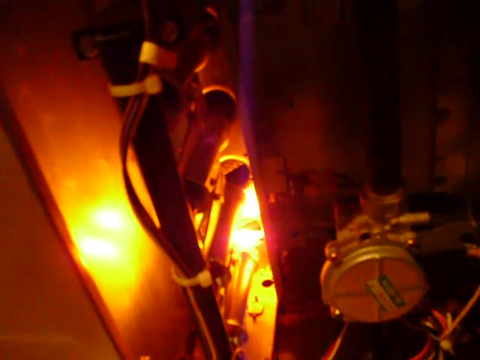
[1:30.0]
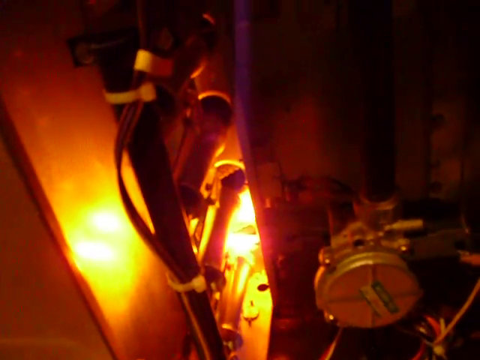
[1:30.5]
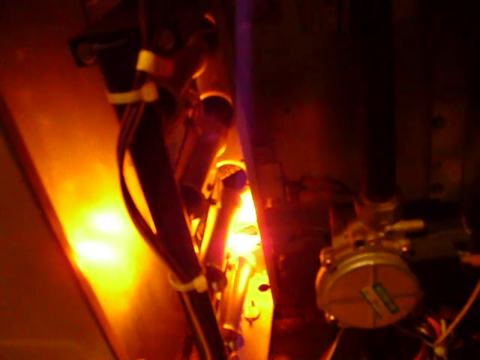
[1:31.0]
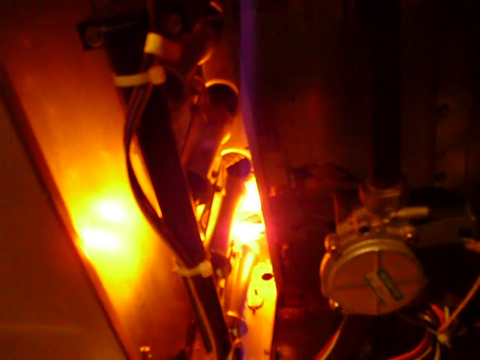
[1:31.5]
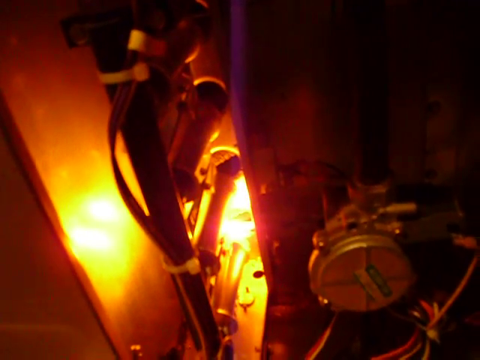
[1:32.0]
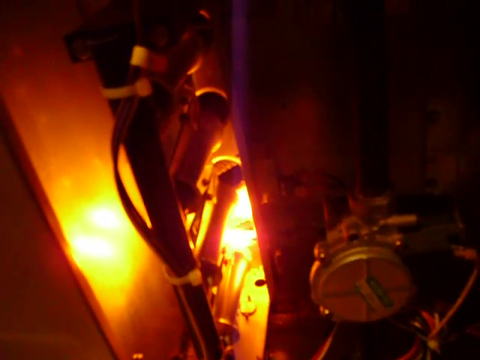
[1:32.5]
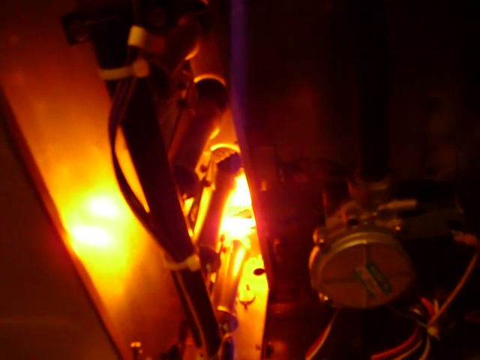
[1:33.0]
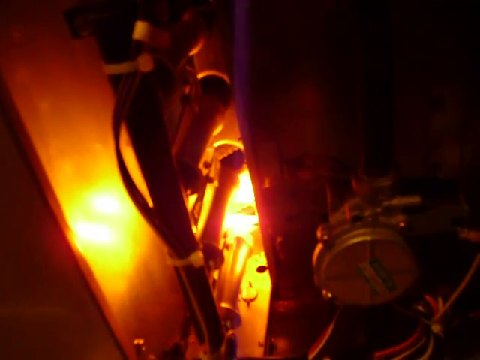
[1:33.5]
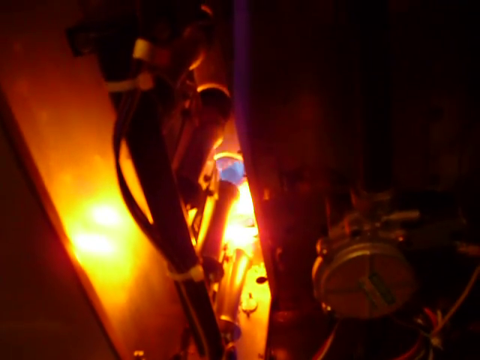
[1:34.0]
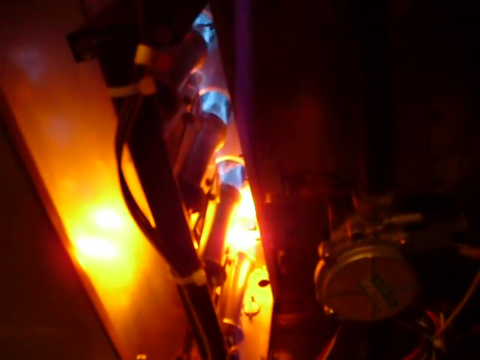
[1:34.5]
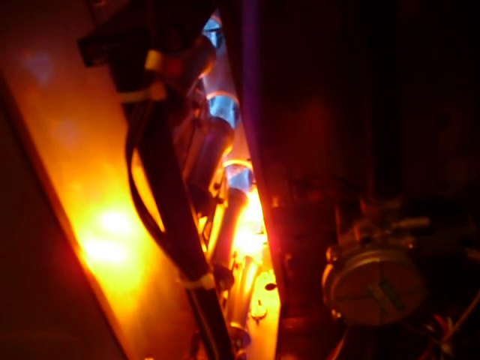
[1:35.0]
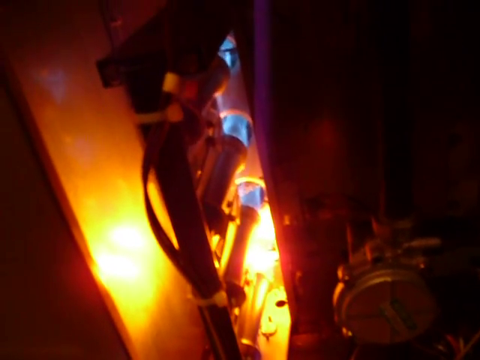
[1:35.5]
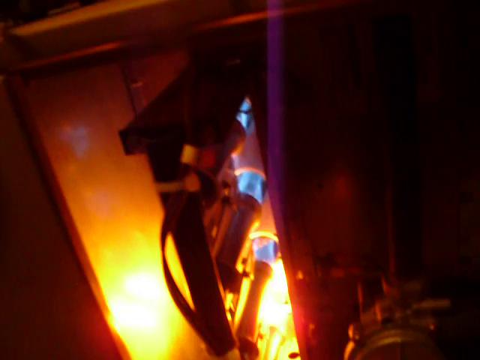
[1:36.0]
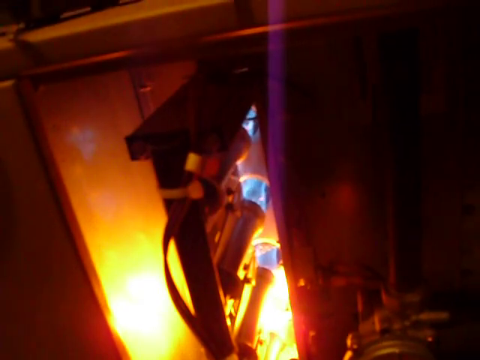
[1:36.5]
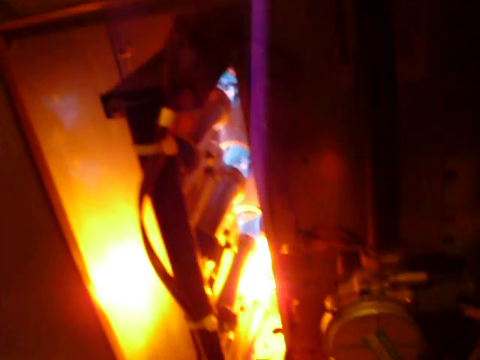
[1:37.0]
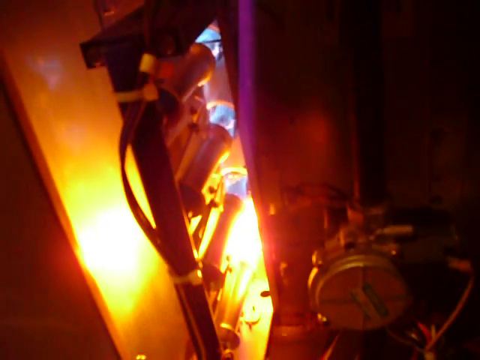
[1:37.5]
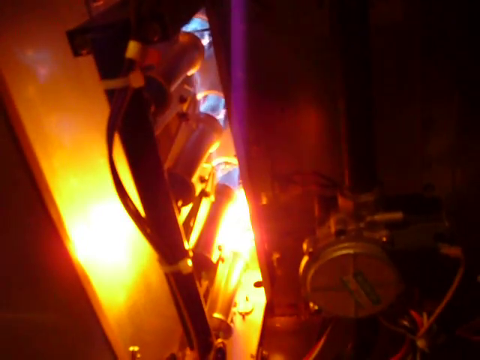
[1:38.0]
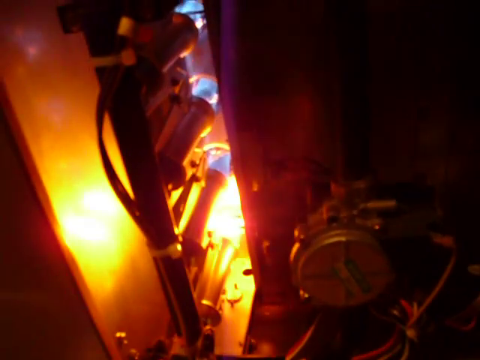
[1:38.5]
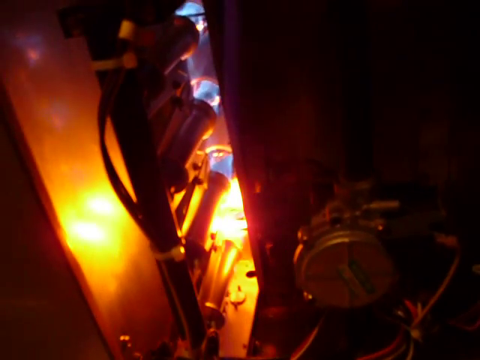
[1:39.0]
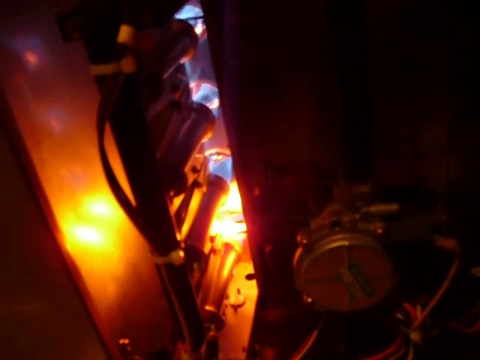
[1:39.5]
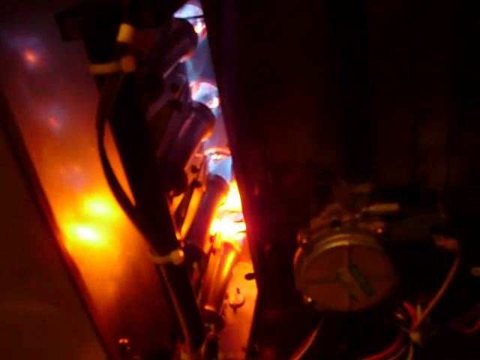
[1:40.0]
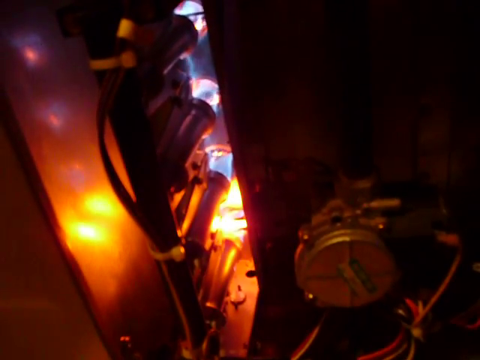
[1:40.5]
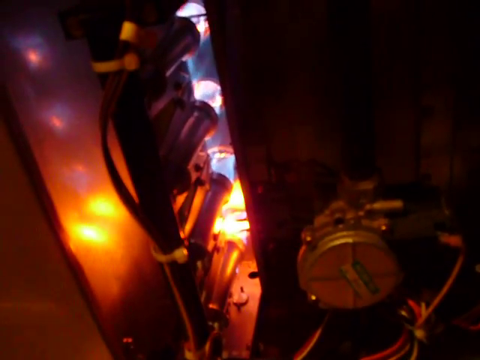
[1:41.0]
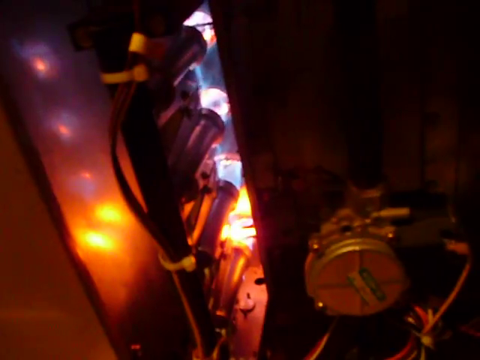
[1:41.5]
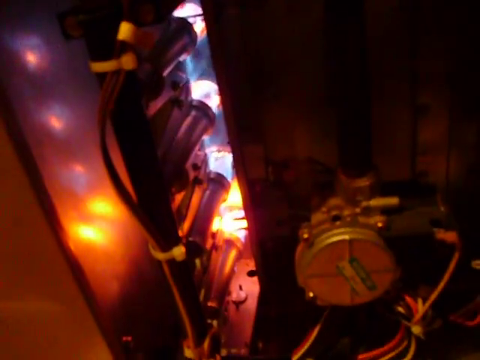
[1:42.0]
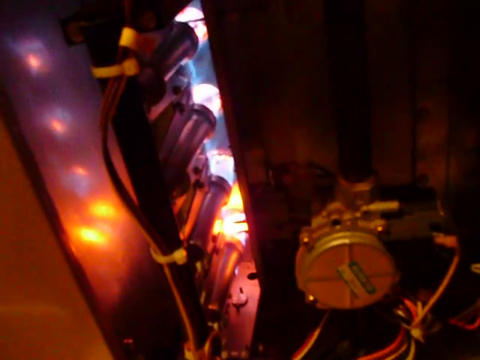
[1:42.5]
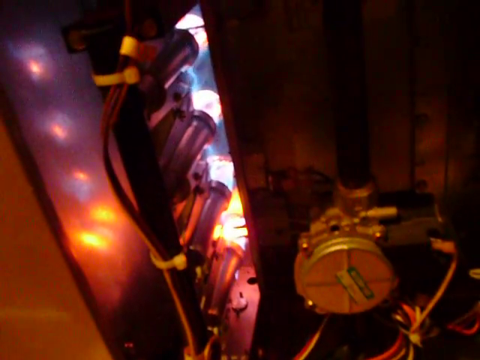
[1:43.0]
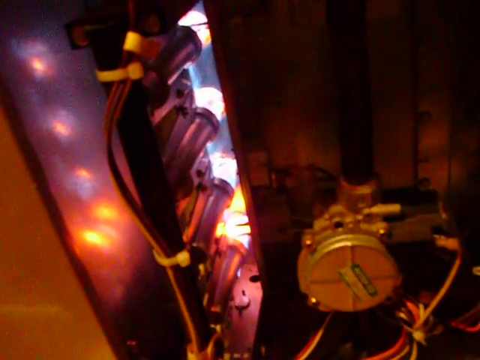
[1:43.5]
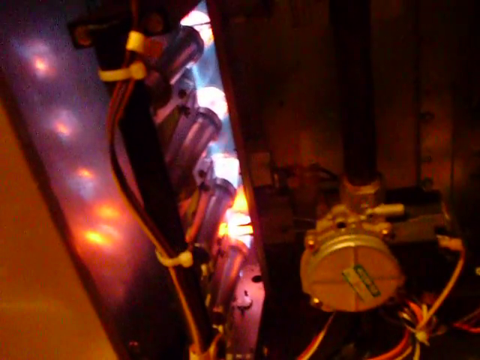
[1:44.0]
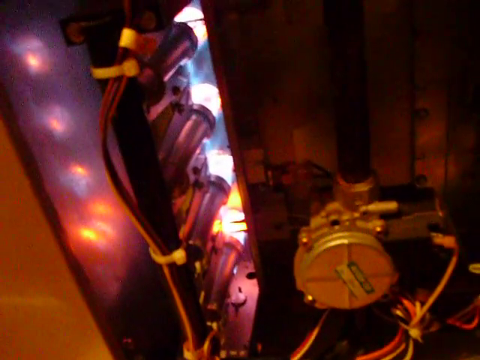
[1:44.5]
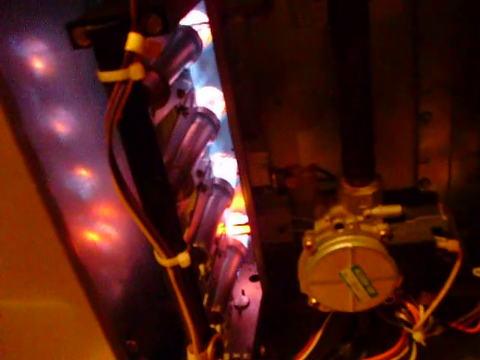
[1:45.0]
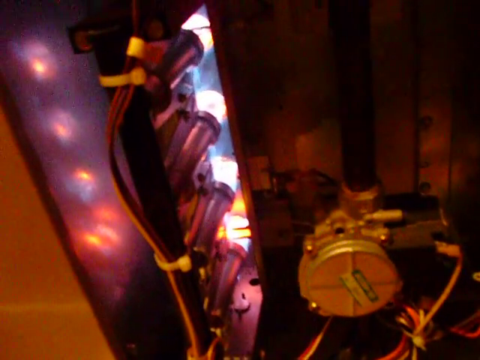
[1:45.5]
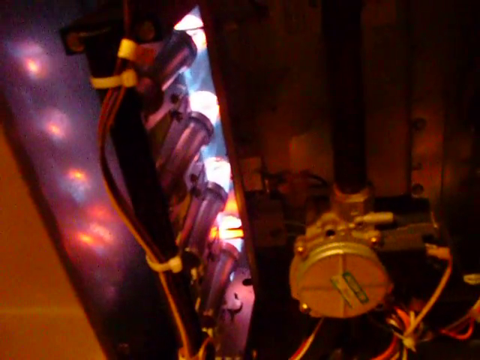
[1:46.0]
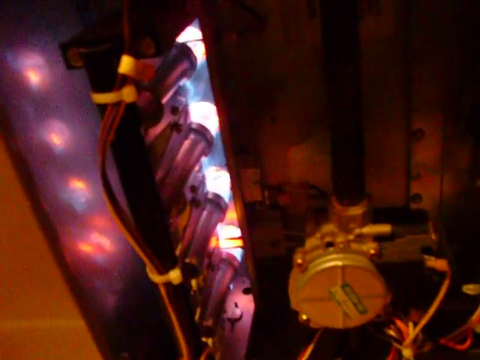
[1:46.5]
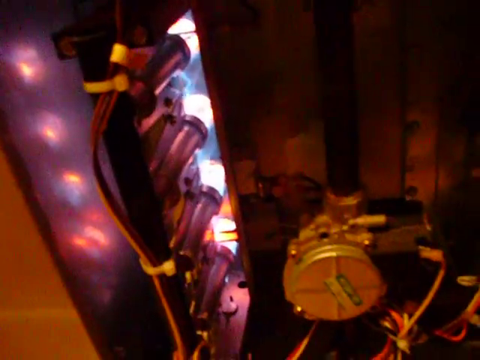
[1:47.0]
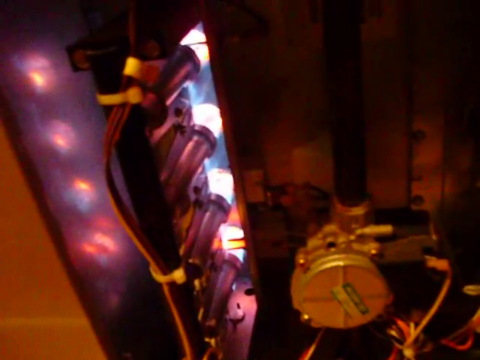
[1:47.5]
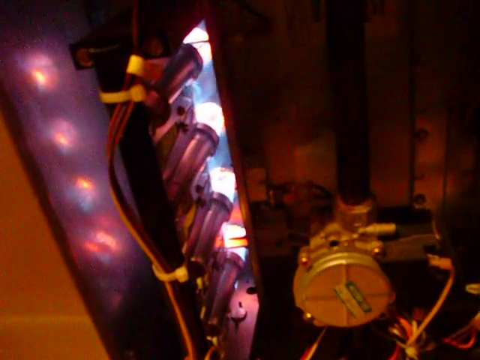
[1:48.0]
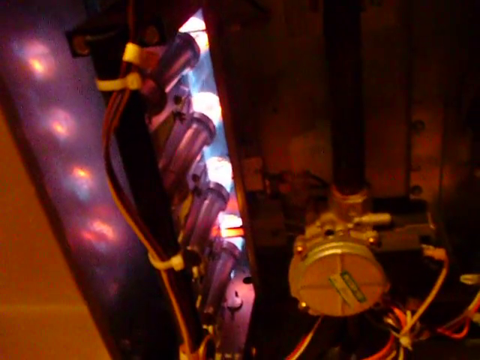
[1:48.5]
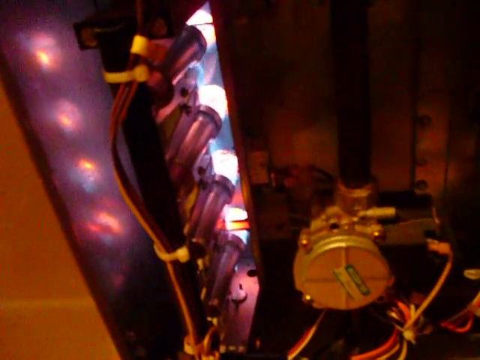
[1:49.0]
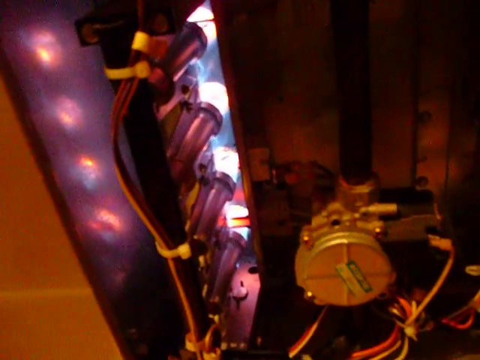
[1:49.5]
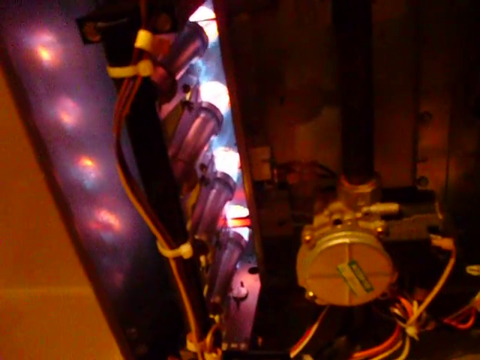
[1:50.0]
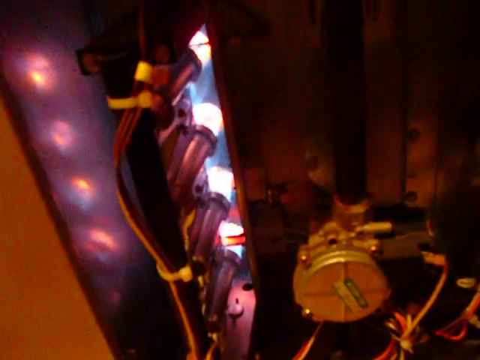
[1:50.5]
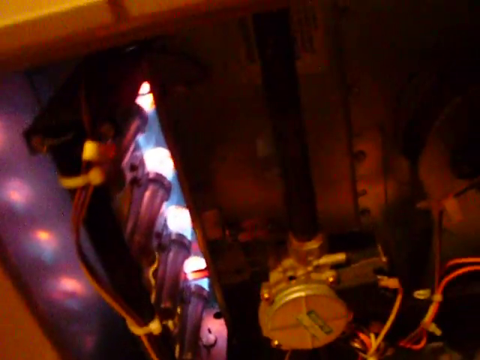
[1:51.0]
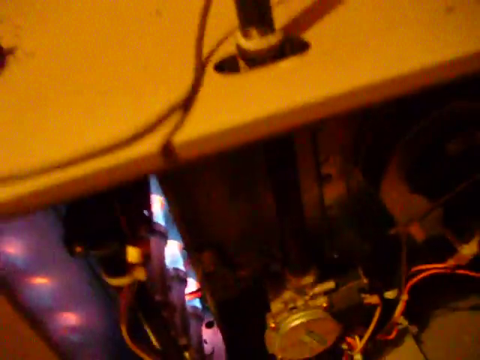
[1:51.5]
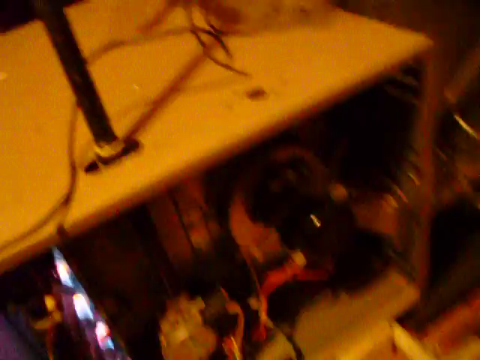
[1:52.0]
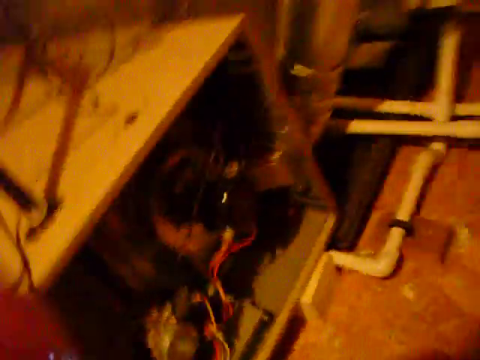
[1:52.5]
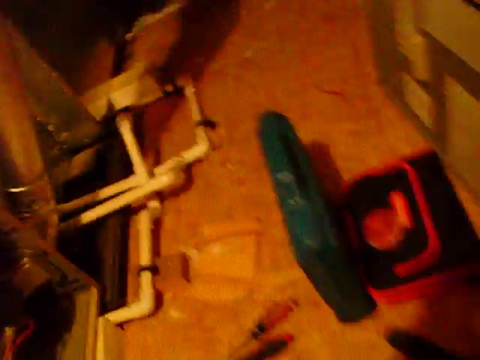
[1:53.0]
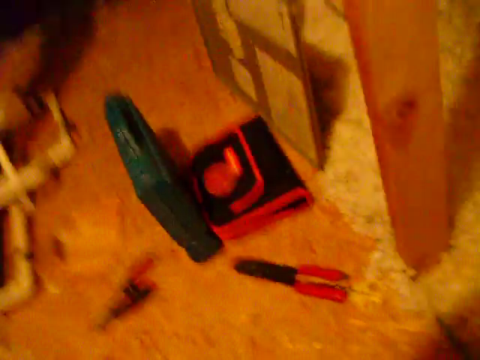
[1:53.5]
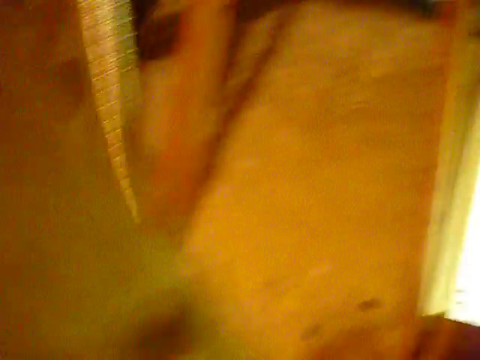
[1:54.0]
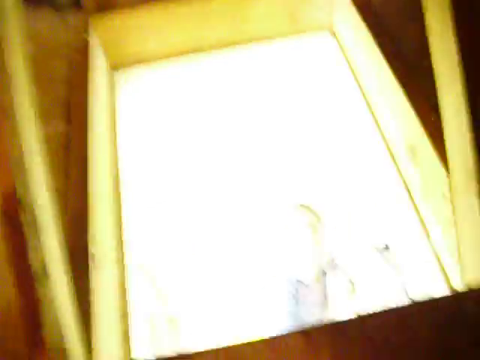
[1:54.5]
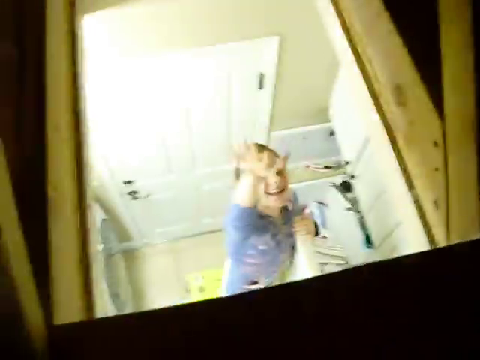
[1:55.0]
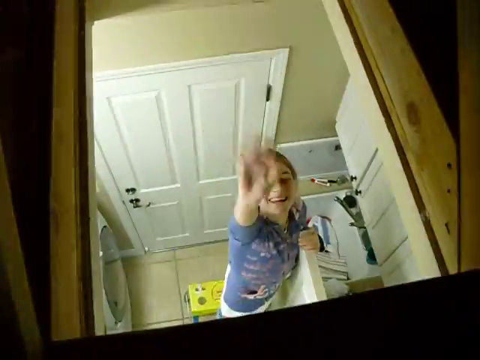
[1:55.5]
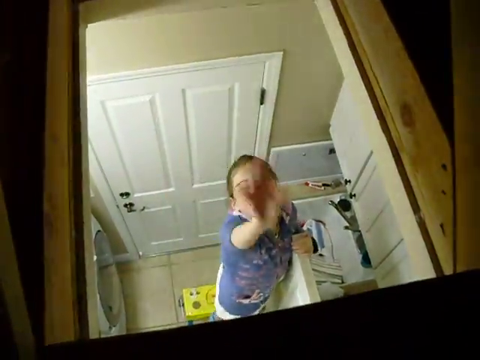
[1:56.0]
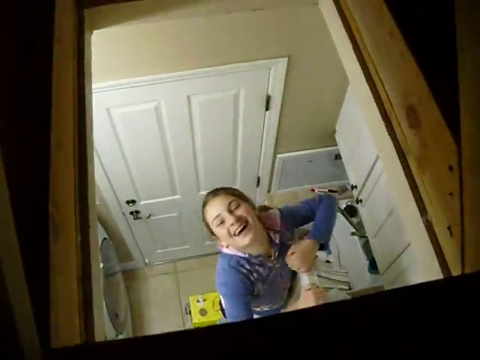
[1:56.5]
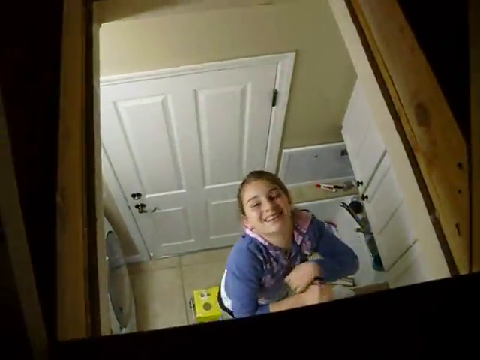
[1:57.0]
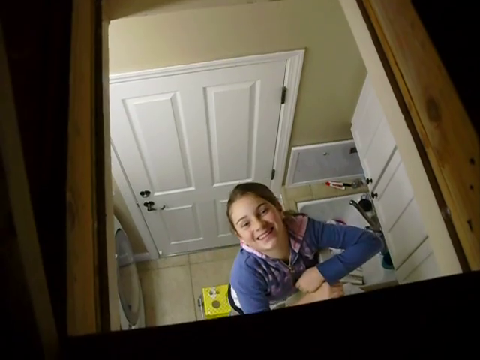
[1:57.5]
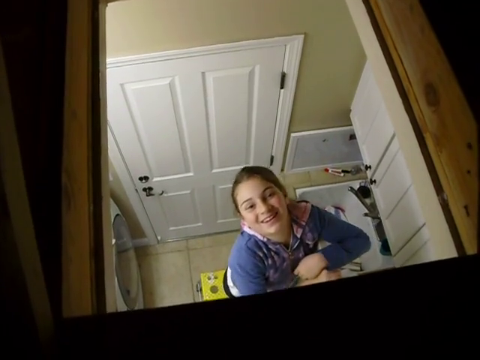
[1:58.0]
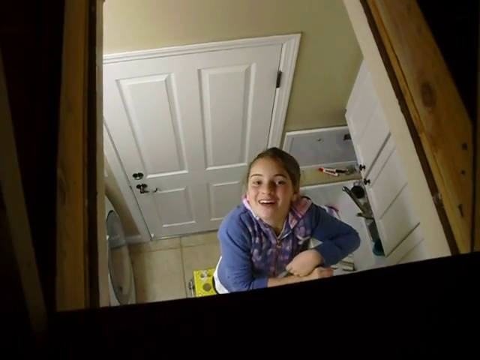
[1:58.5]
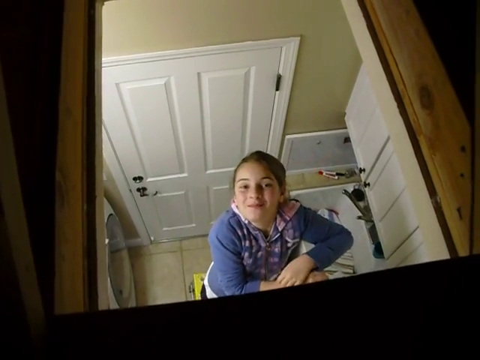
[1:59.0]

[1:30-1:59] The glowing part intensifies in color and illumination. After some time, four metal tubes lined up above the glowing portion suddenly light up in a jet-like motion, with flames coming out of their open round ends. The tubes appear to direct the flames into cut-out openings in the metal wall of the interior compartment. The camera then moves away from the opening, revealing the surroundings of the box: a trapdoor in the floor with a ladder going down, apparently in the attic of a house. Through the trapdoor, what appears to be a woman looks up at the camera, waving her hands and smiling, in what appears to be a bathroom. There is a sink, tiled floors, and what appears to be a washing machine or a similar appliance in the background.